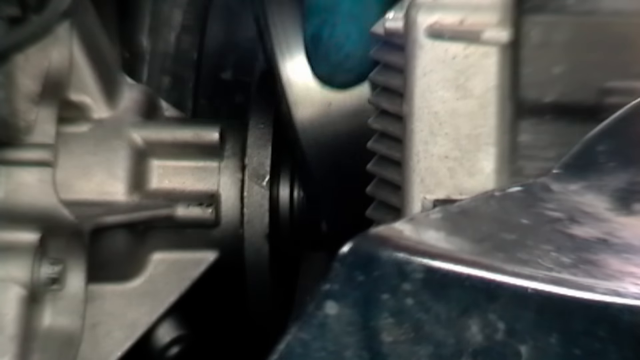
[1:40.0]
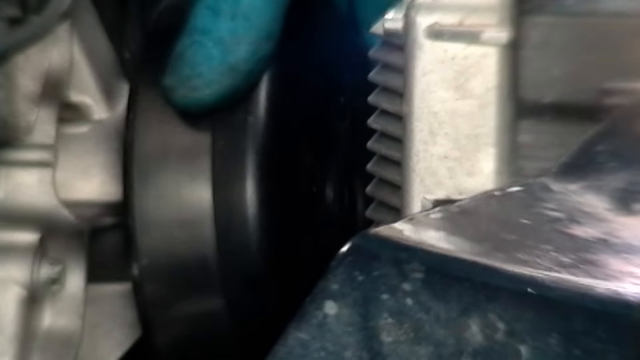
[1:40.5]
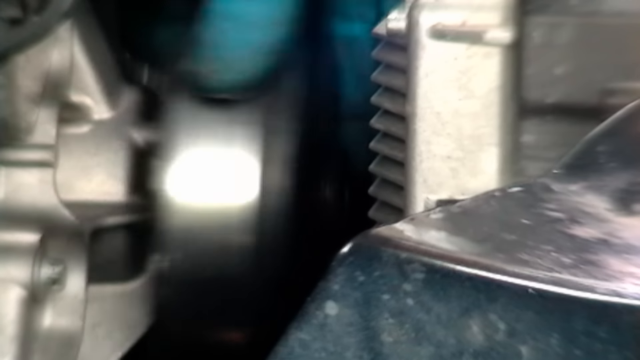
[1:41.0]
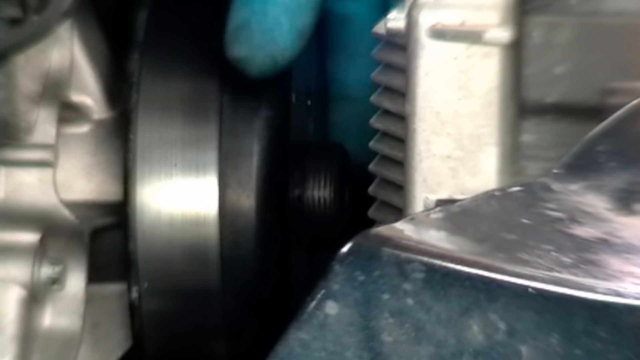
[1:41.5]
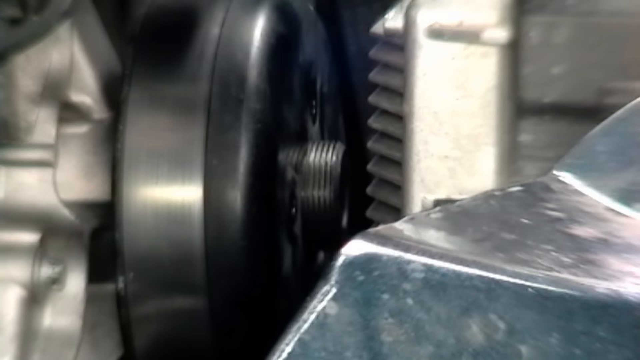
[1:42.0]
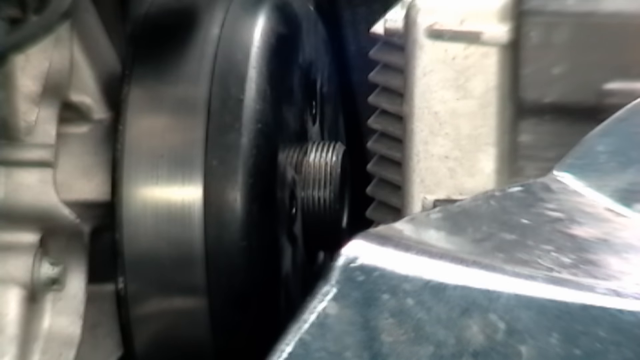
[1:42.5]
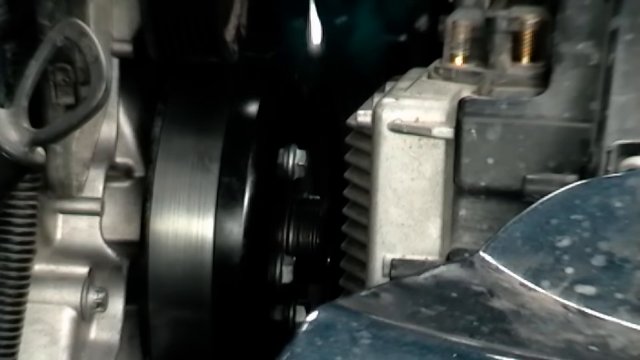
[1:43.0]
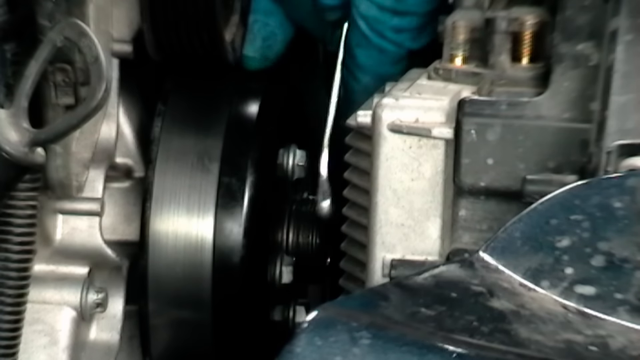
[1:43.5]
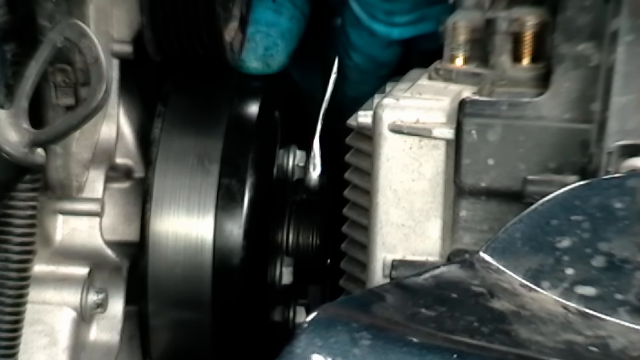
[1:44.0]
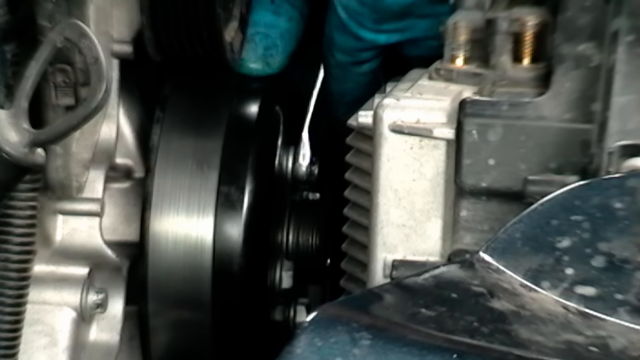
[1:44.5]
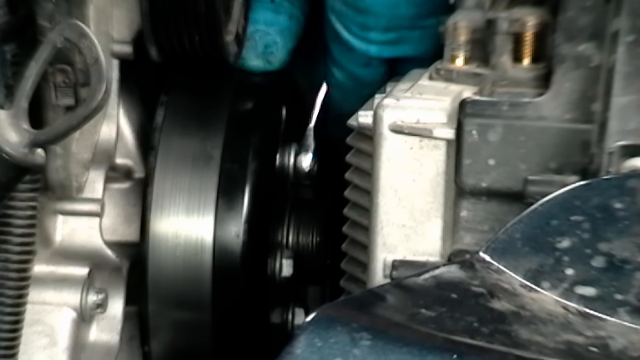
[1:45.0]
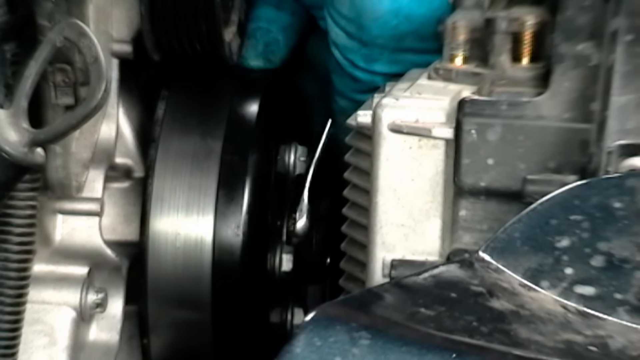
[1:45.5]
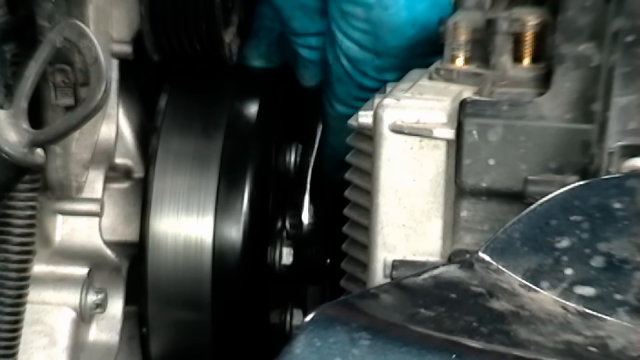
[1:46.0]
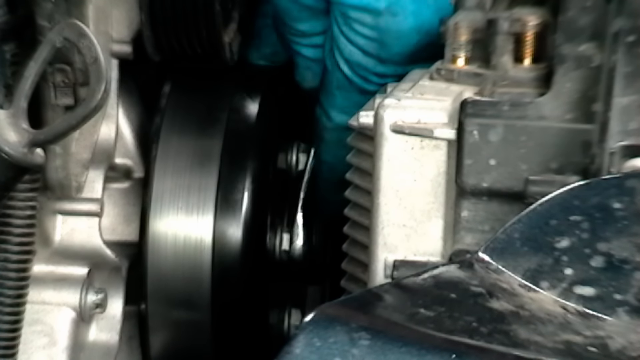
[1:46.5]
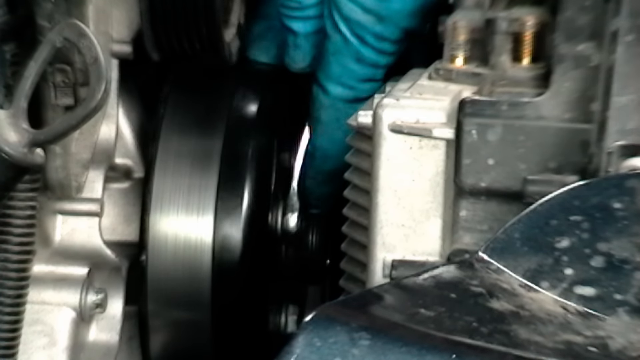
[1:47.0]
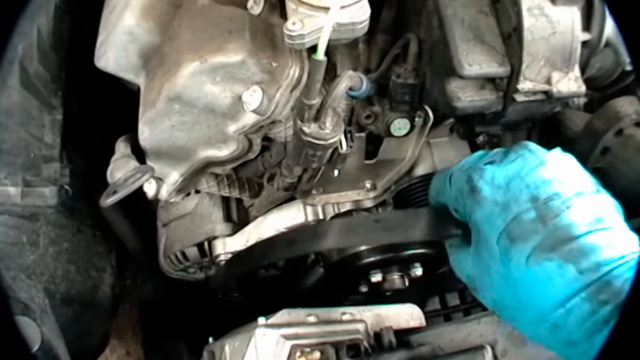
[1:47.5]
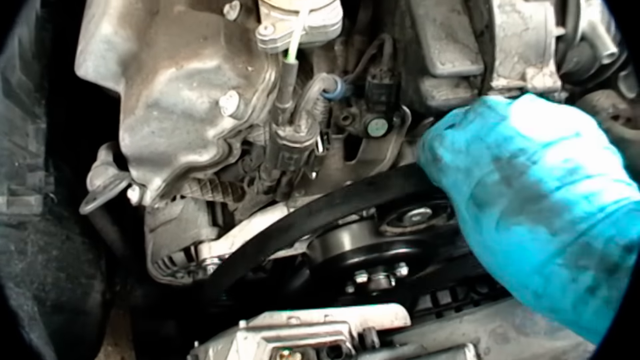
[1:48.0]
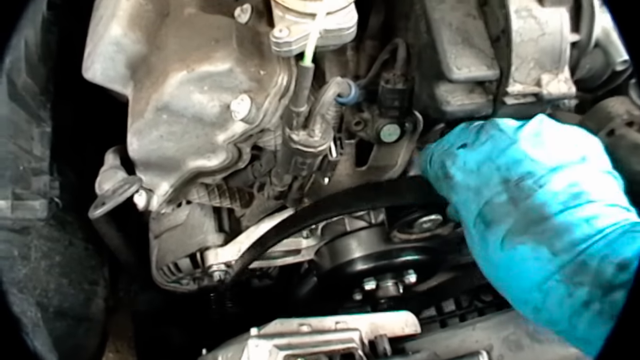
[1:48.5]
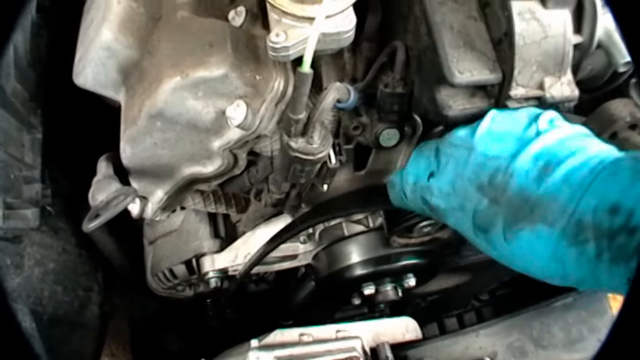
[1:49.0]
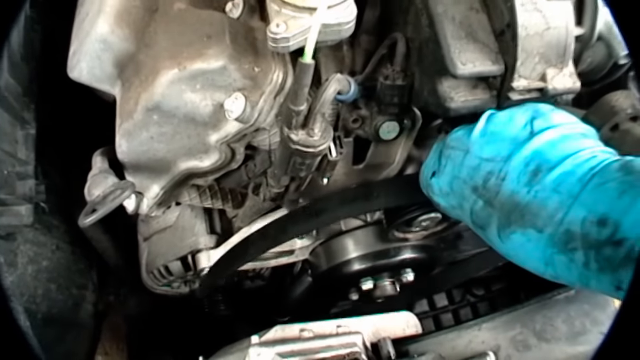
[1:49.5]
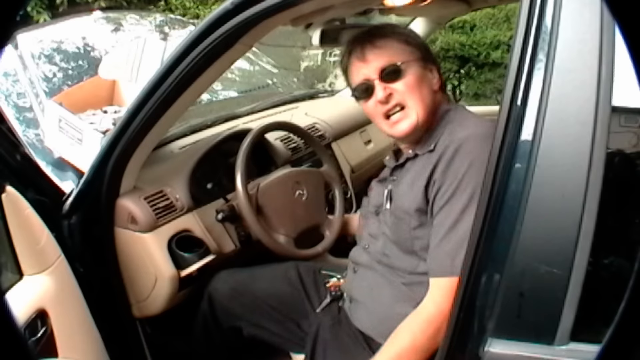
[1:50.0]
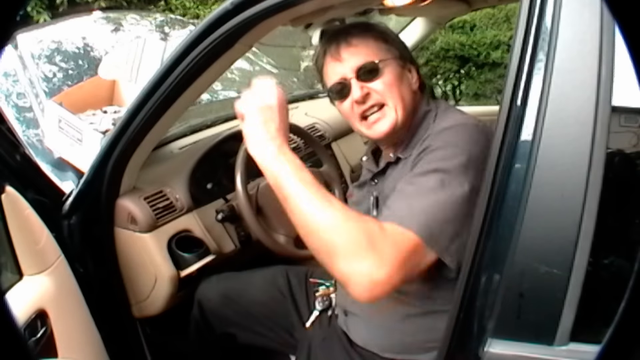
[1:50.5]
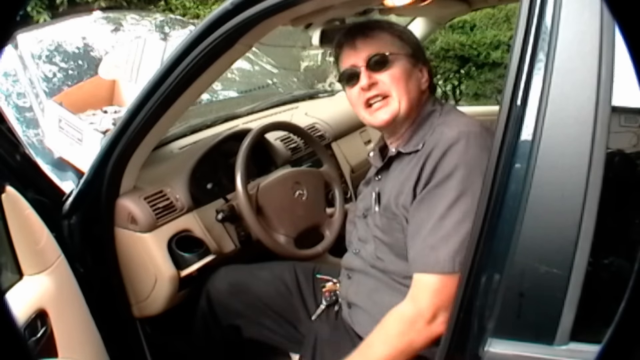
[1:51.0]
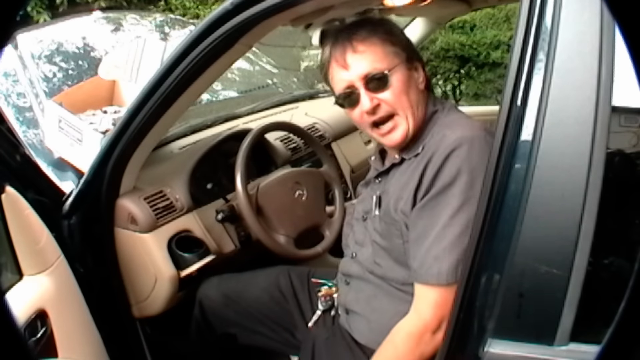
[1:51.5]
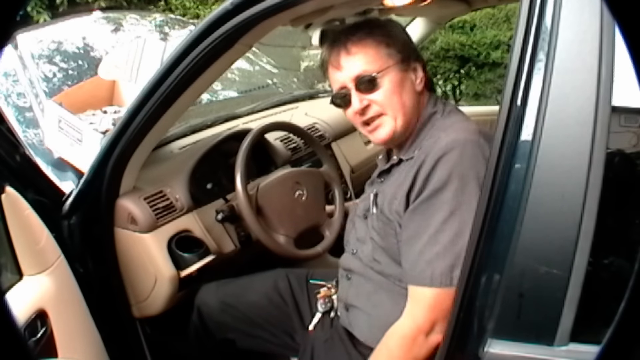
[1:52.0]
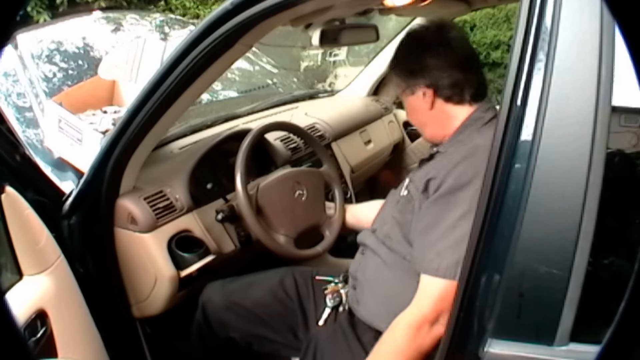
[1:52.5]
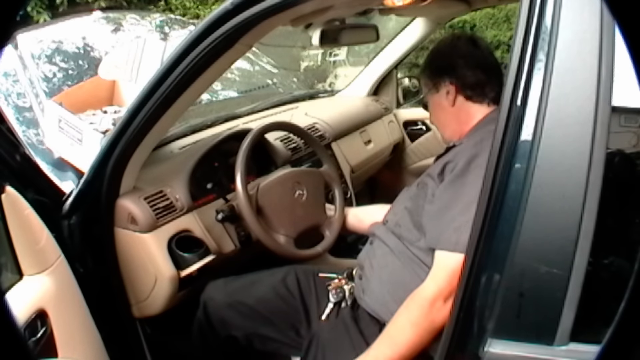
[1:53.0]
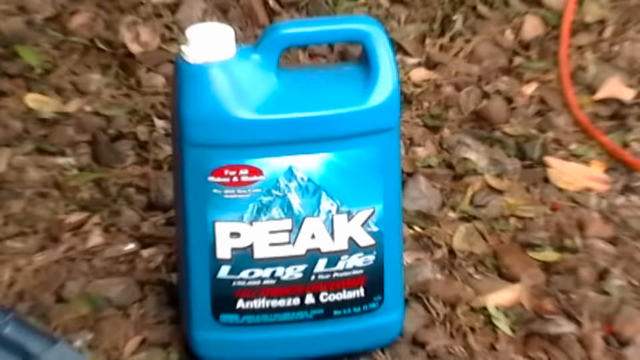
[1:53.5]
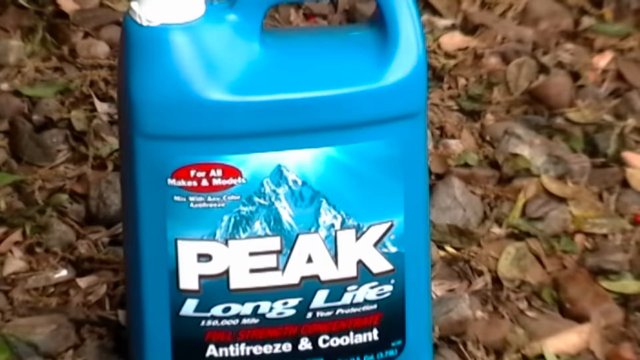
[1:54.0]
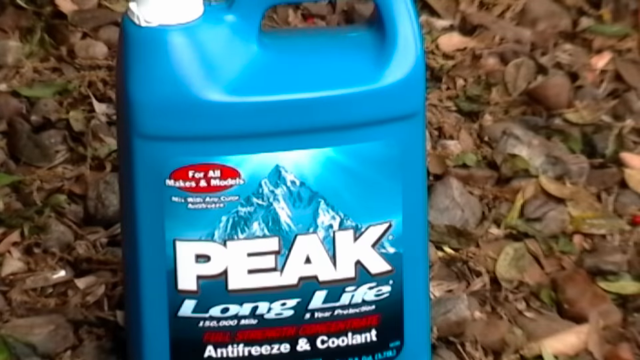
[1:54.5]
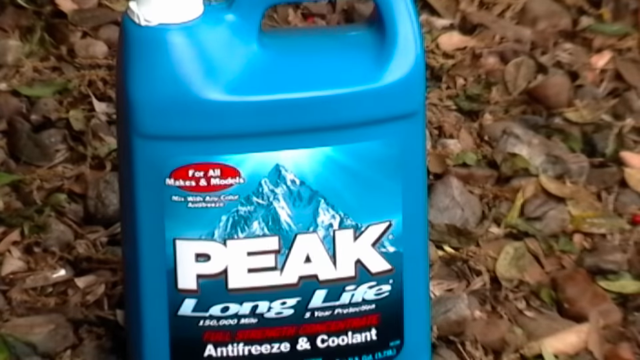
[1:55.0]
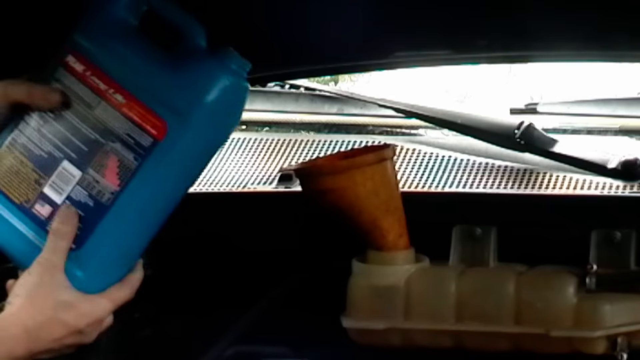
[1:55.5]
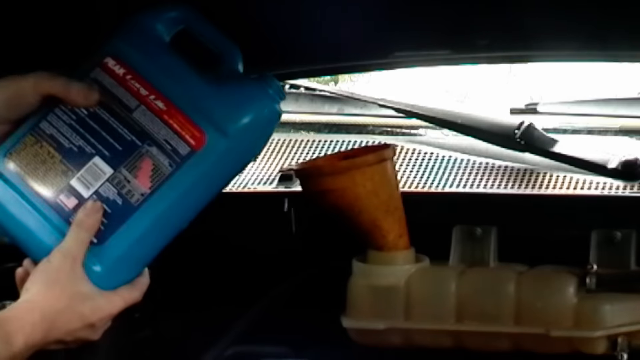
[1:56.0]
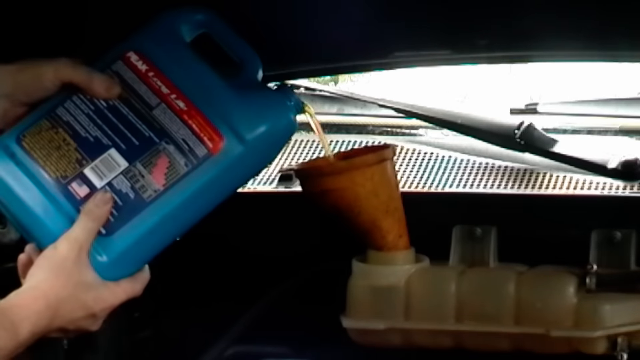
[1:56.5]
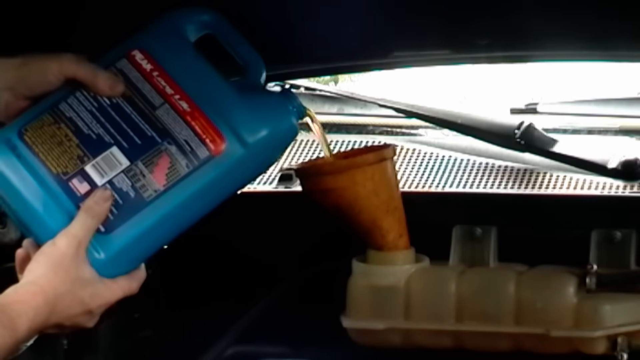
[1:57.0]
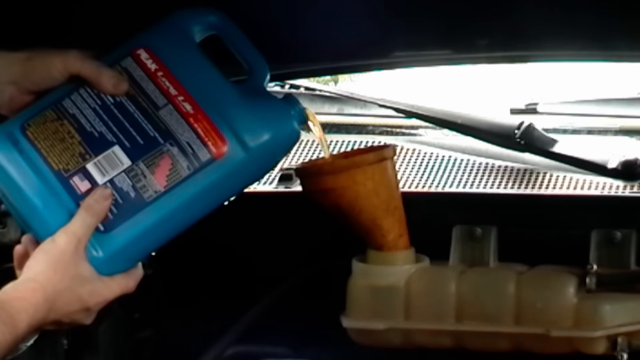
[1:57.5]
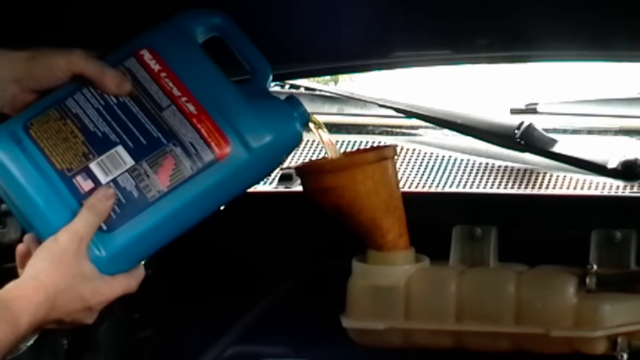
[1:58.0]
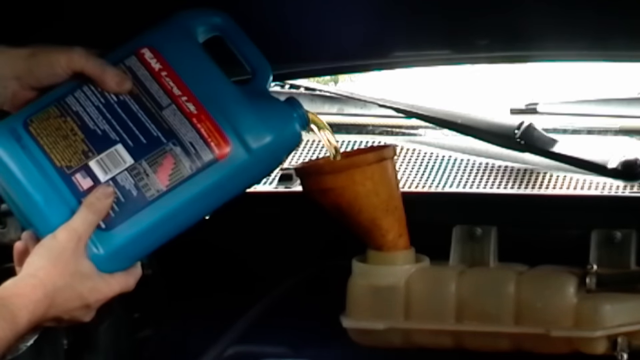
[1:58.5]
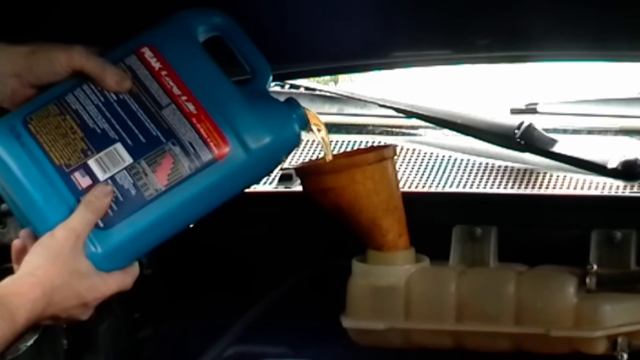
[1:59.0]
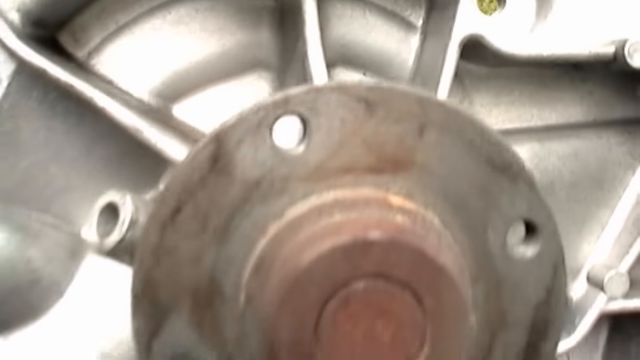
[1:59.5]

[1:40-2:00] A close-up shows the inside of an engine, where a person with a blue glove screws a part into place. The part is largely silver on the front side with a black backing. The gloved person uses a nut and a nut fastener to tighten the nuts and bolts onto the piece. From another angle, above the engine, he appears to be placing back into the vehicle a strap that was removed earlier. A man then sits in the driver's seat under the steering wheel, seemingly explaining what is happening. He wears gray pants, a gray button-up shirt, and dark glasses. Talking directly to the camera, he puts the key in and looks as if he is going to start the vehicle. The camera pans away to a blue jug on the ground with "peak long life" on the front. The man has gotten a funnel and slowly funnels the liquid into the vehicle.